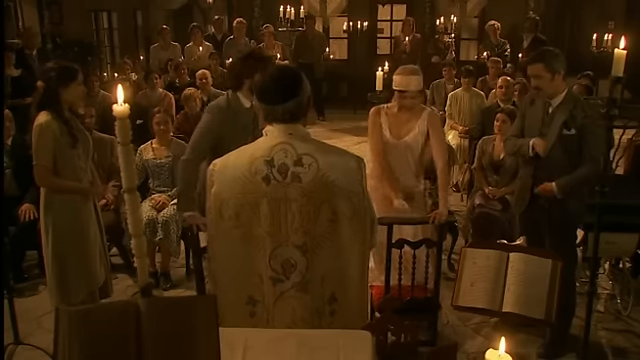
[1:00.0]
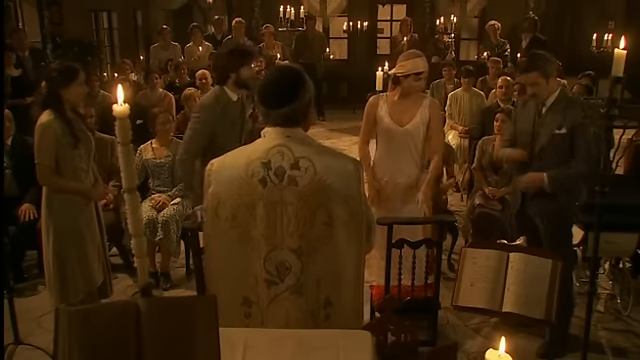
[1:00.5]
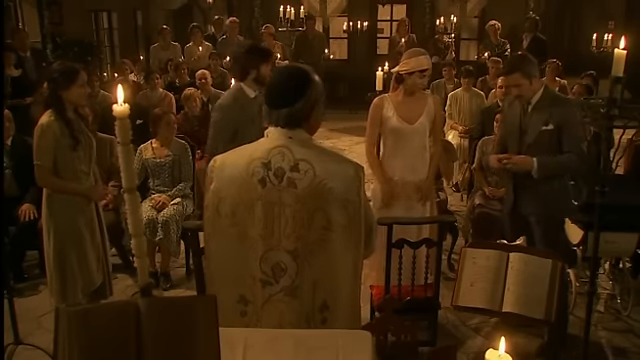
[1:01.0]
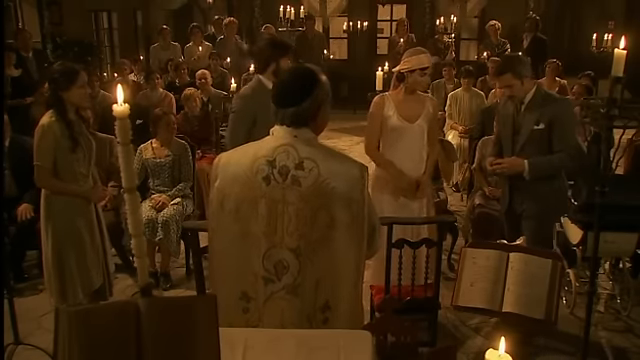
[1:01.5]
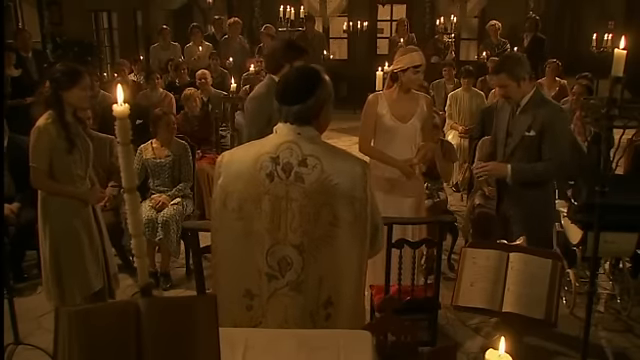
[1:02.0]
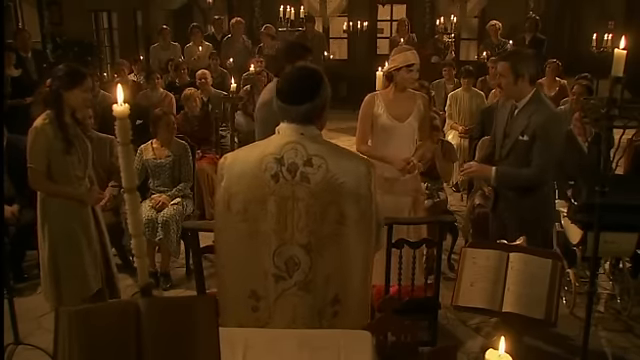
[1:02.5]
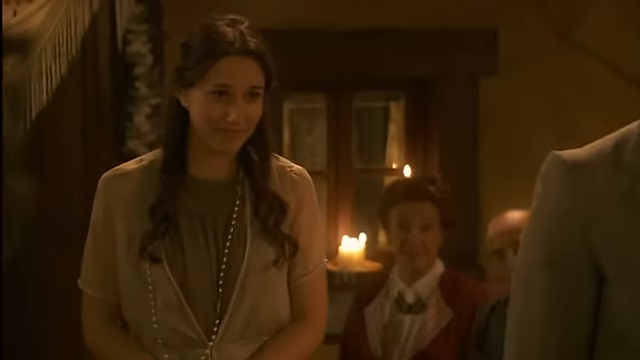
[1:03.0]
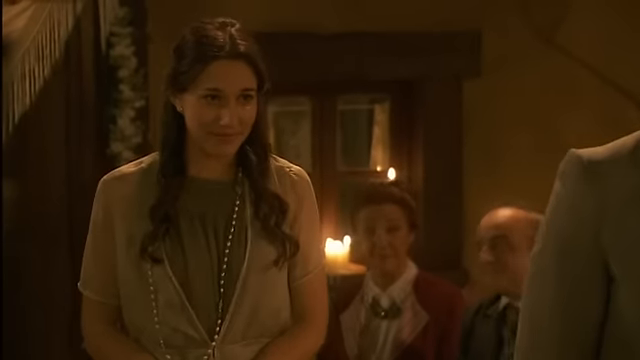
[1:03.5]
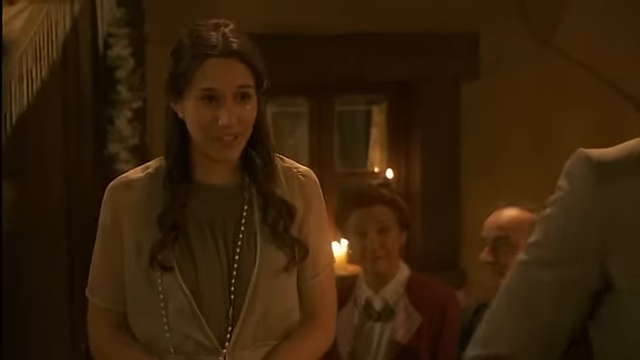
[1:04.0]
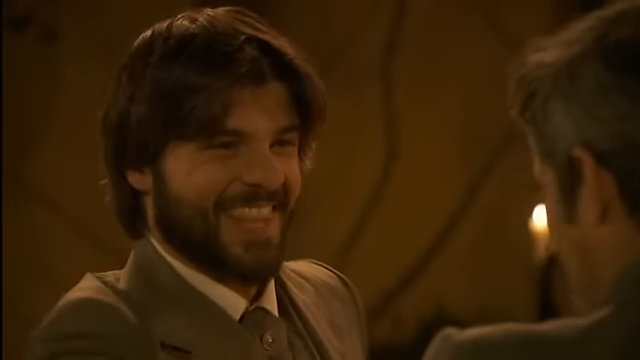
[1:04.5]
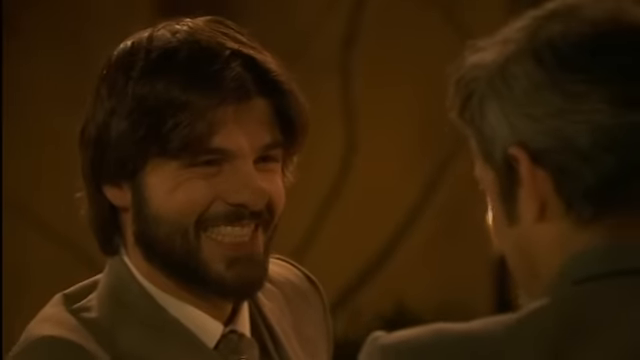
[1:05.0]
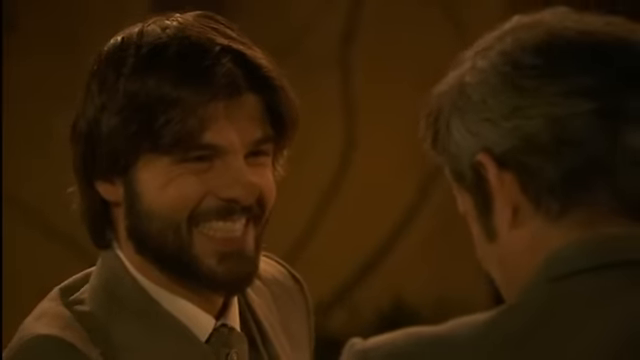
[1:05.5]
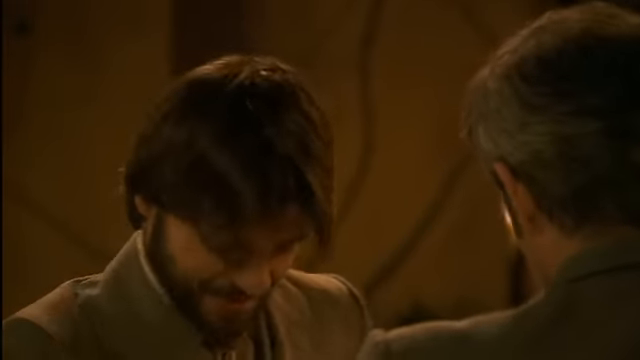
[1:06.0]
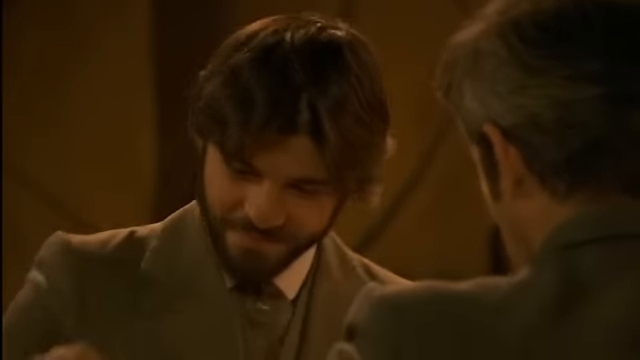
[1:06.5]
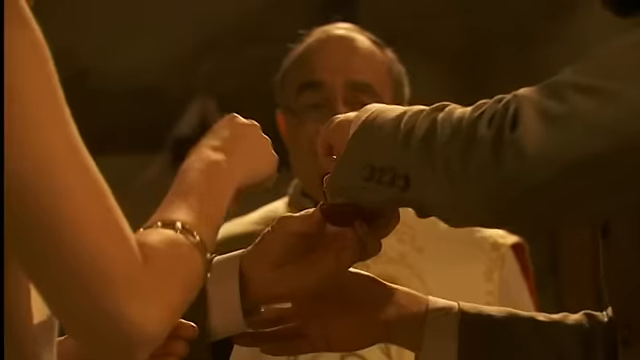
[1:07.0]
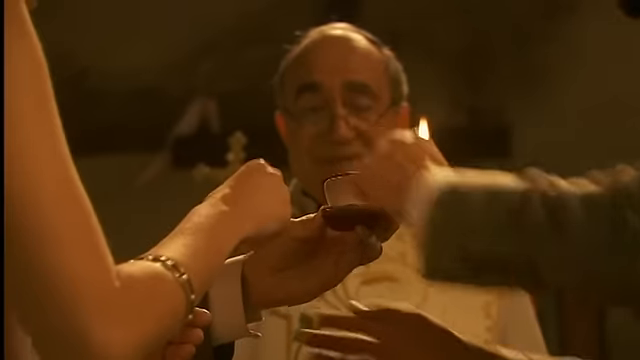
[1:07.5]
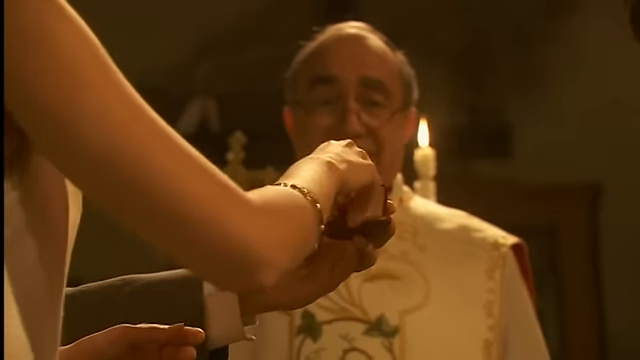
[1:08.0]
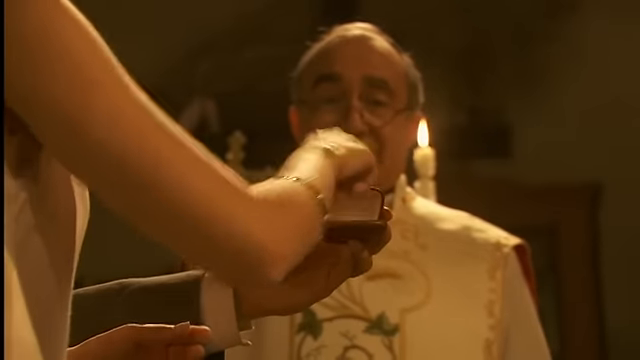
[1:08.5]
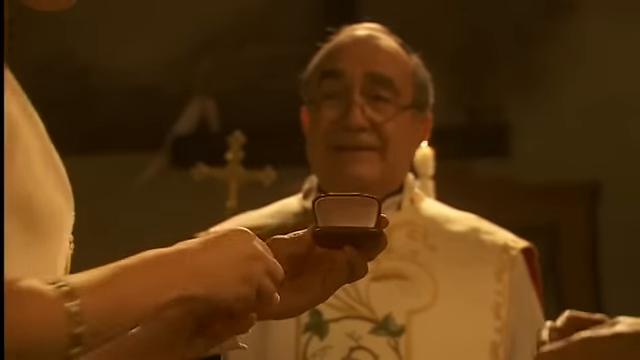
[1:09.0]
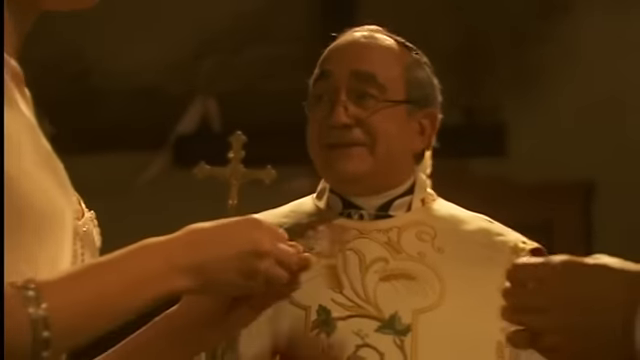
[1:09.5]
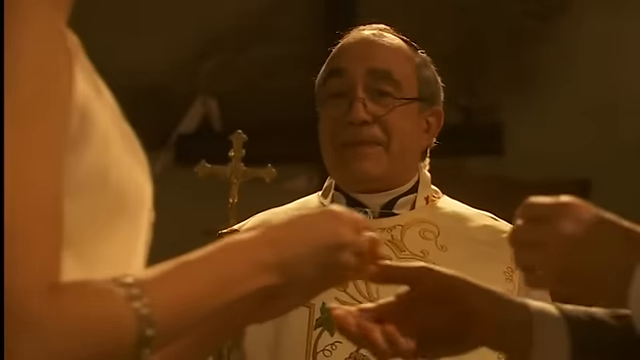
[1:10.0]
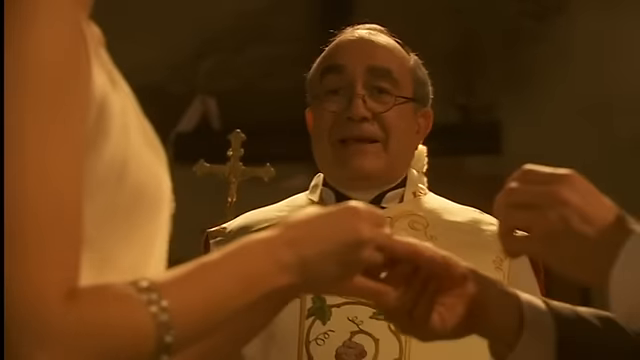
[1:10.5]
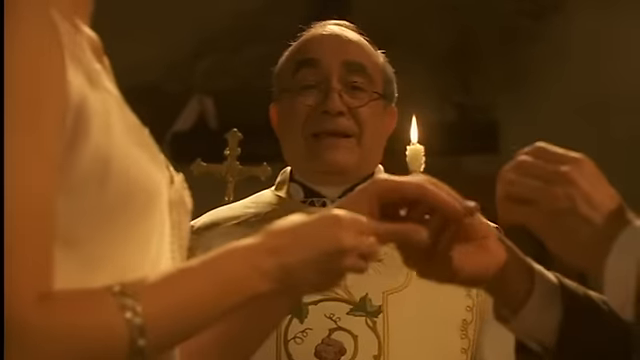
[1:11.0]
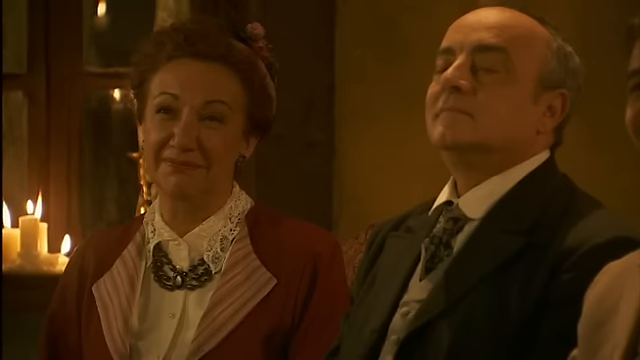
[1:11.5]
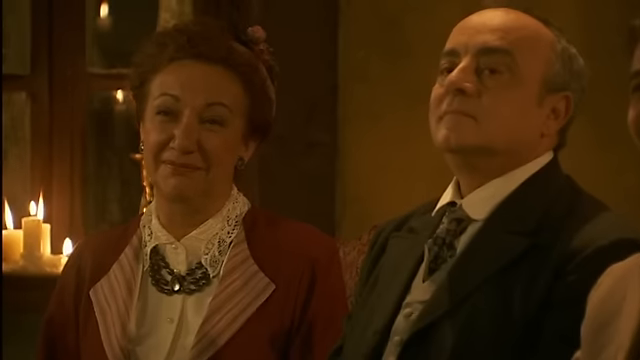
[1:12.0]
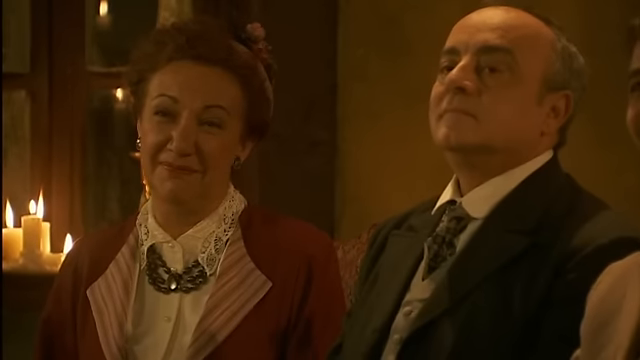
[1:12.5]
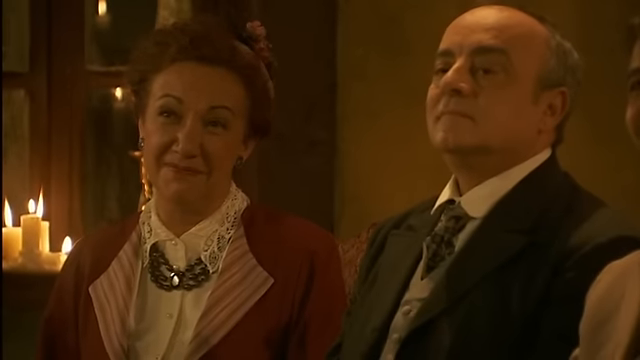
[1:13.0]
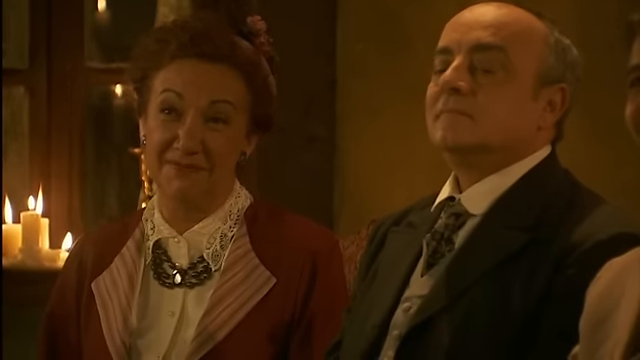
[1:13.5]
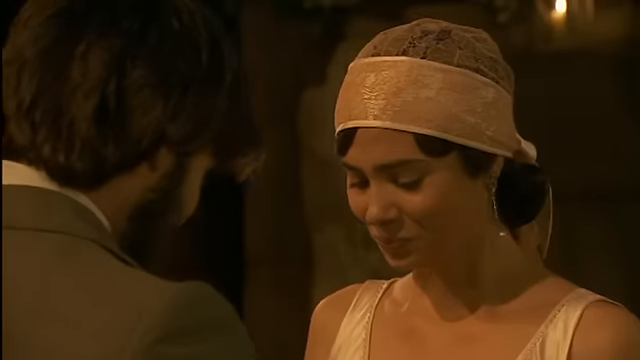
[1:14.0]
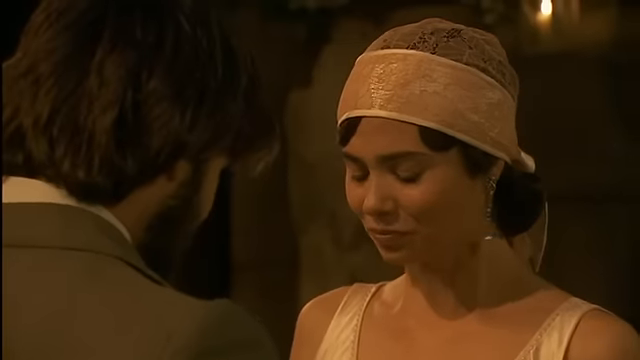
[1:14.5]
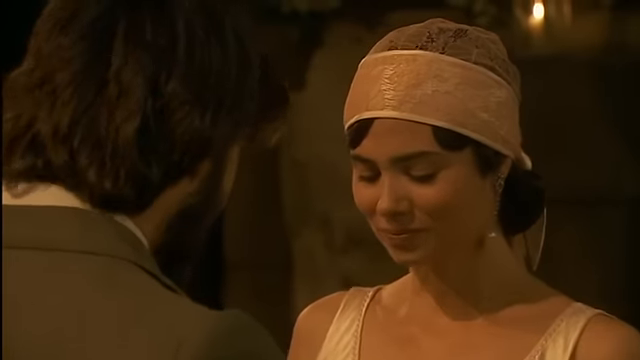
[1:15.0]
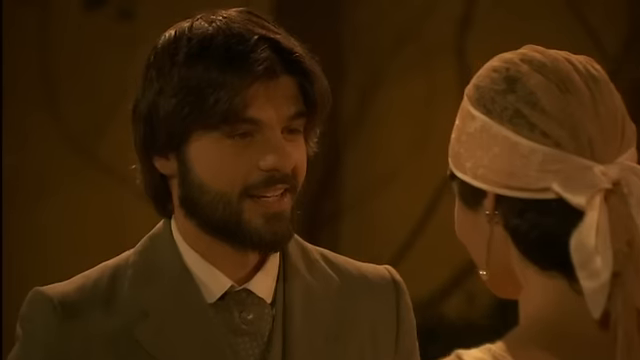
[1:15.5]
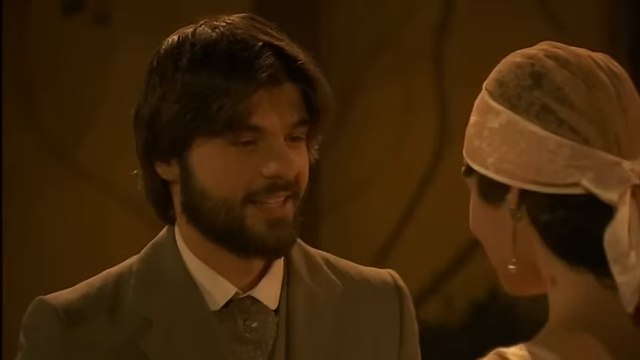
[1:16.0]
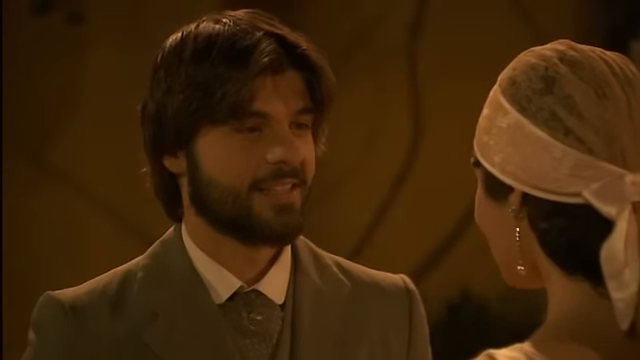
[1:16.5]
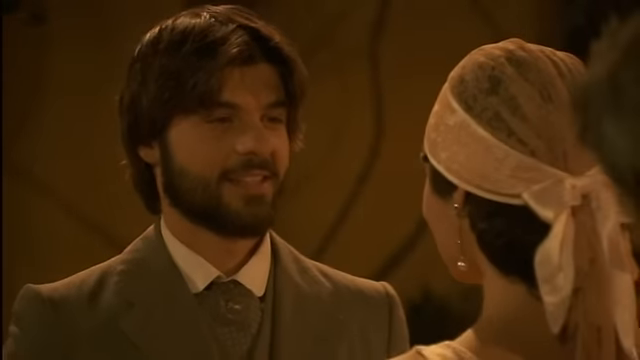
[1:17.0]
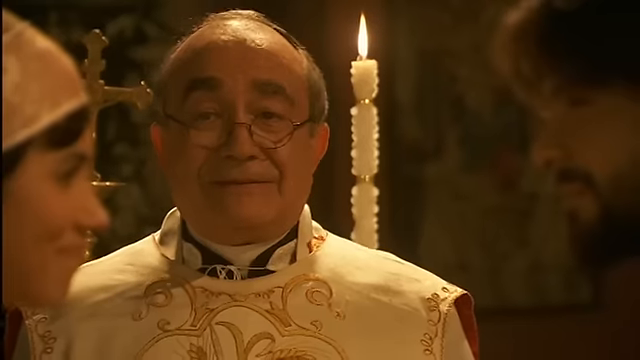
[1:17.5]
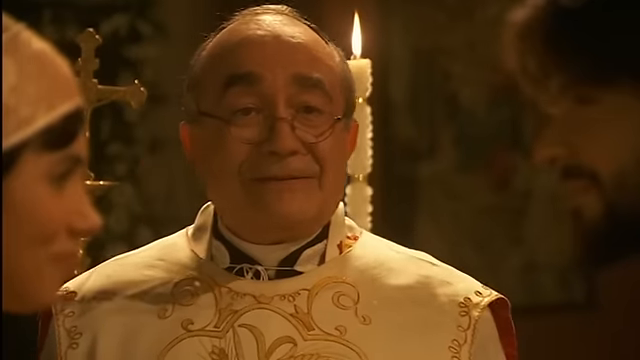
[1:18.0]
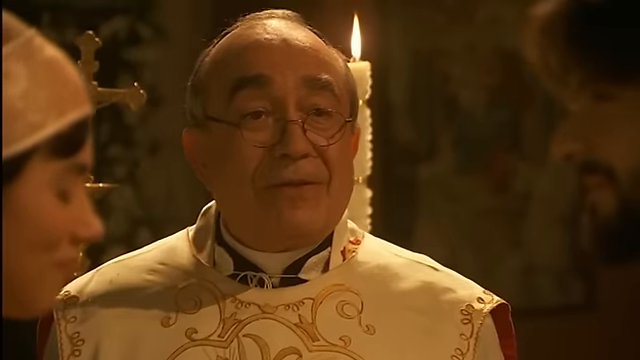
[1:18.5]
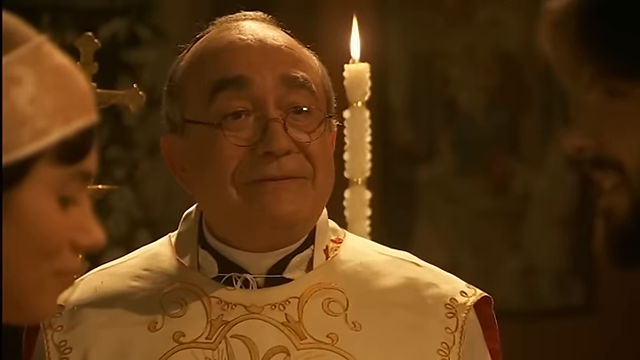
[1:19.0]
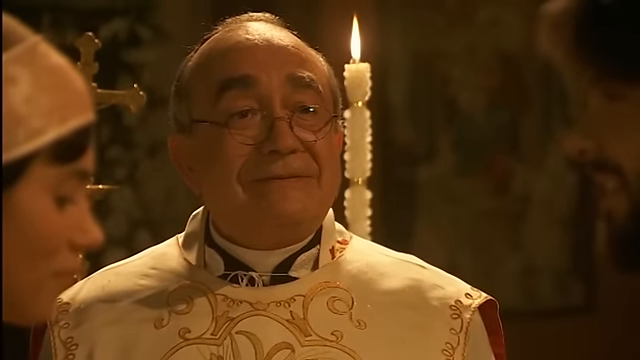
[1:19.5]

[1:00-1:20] The two people in front of the priest get up from behind some chairs and stand up straight, while the man beside the bride has found what he was looking for in his pockets, apparently their wedding rings, and pulls them out to give to the bride and groom. The shot cuts to the lady on the right-hand side of the groom saying something; she has brunette hair and wears a cream-colored shawl over a green shirt with a very long strand of pearls. The groom looks at the man who handed over the rings and gives him a huge smile and a handshake. As the couple take the rings from the box to swap them in front of the priest and, apparently, all their friends and family, the shot goes to the redhead and her husband in the back of the crowd, smiling approvingly, and then back to the two exchanging rings and vows in front of the priest.